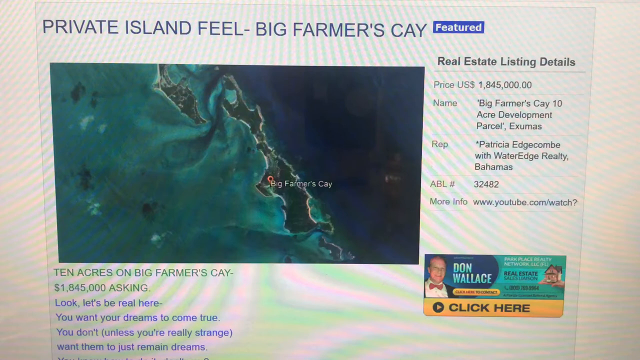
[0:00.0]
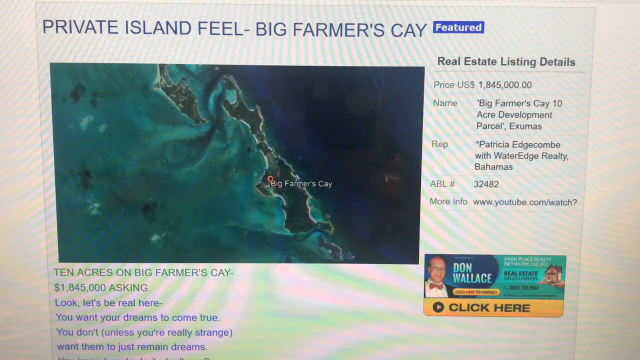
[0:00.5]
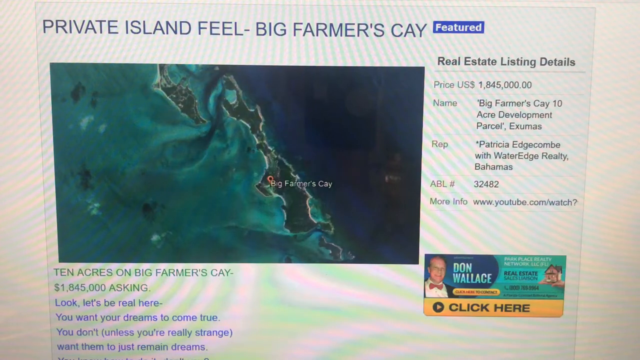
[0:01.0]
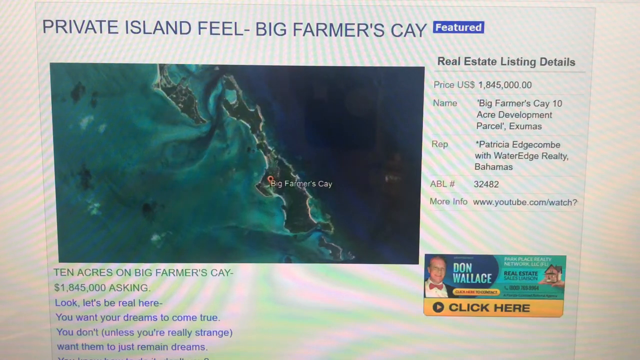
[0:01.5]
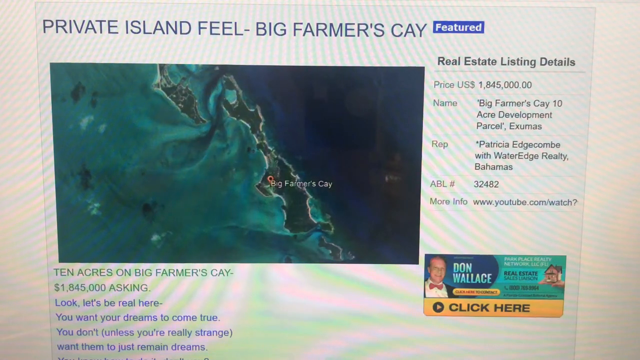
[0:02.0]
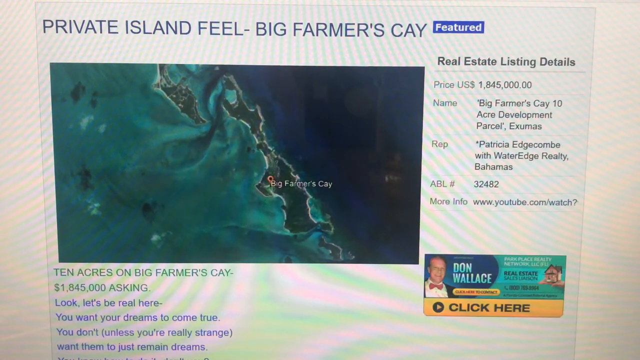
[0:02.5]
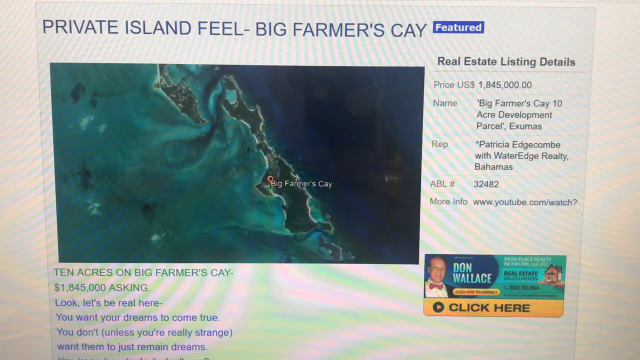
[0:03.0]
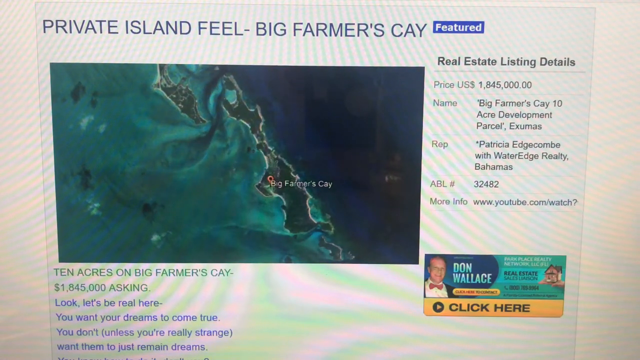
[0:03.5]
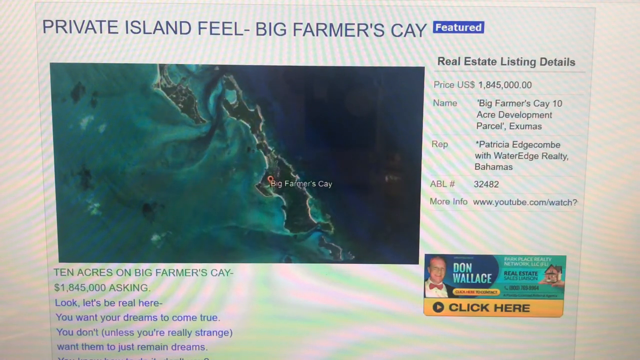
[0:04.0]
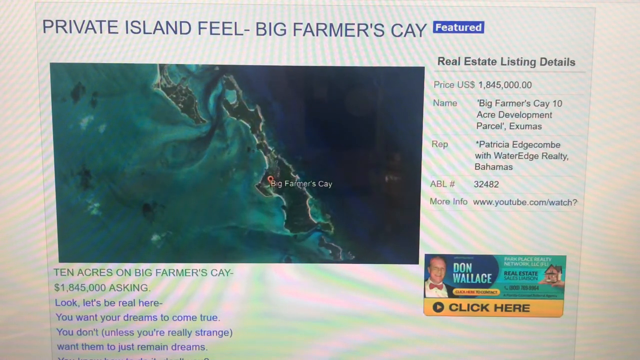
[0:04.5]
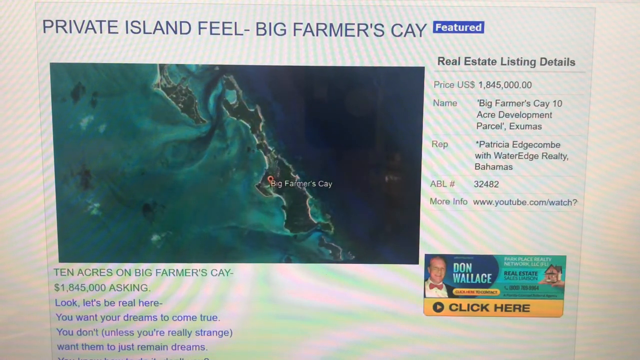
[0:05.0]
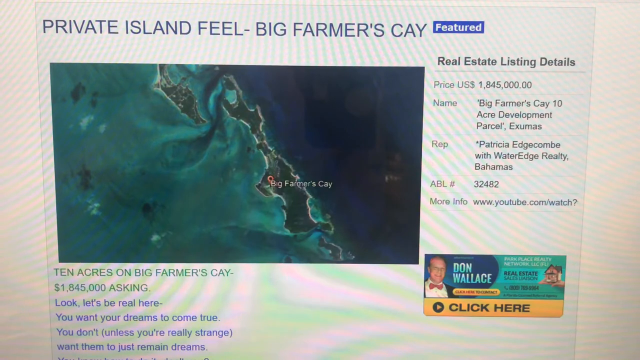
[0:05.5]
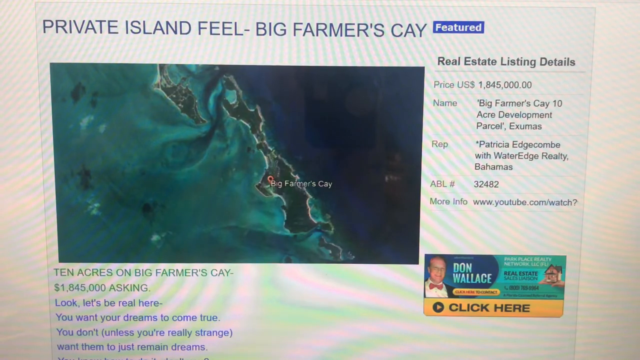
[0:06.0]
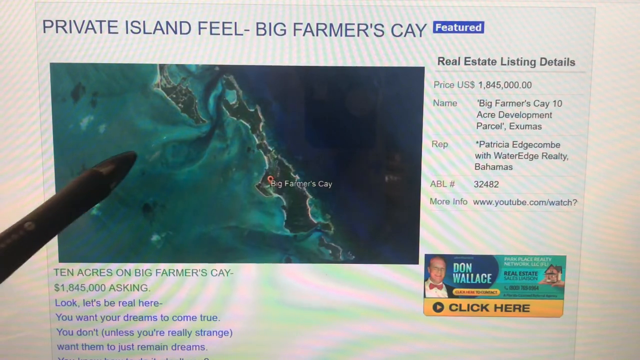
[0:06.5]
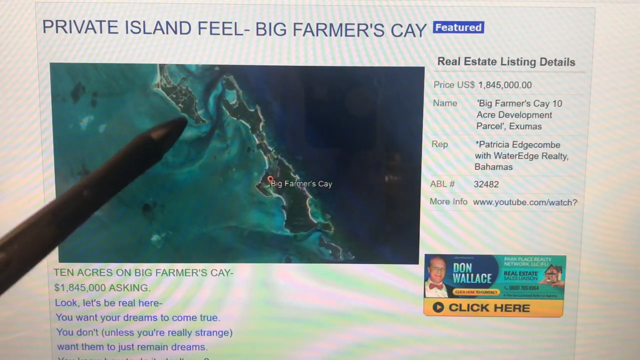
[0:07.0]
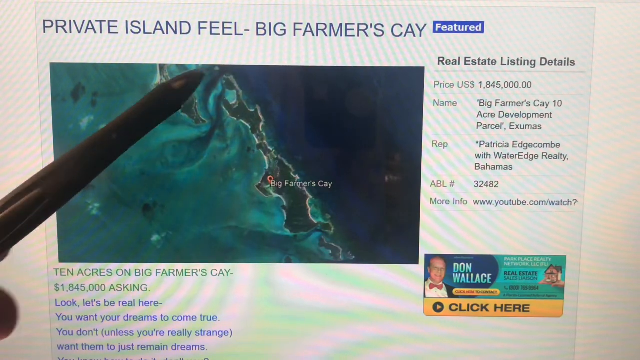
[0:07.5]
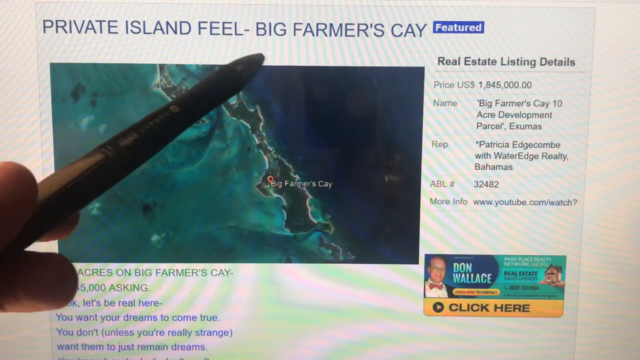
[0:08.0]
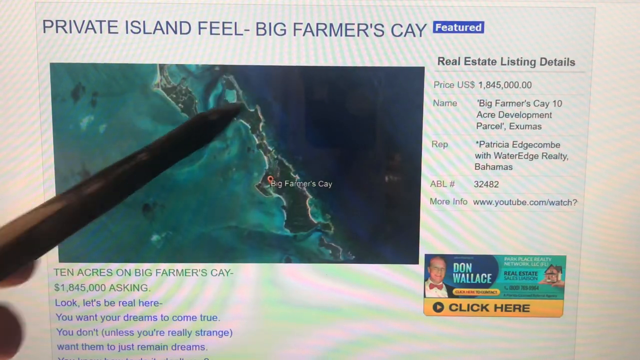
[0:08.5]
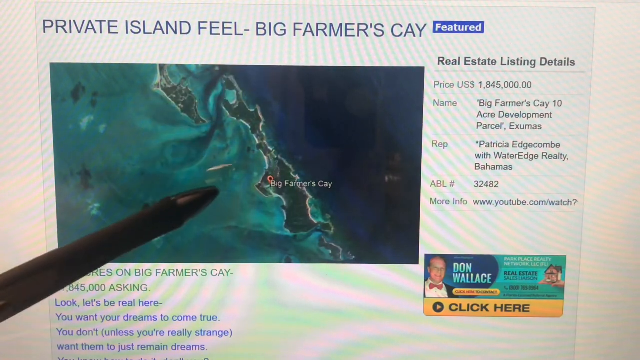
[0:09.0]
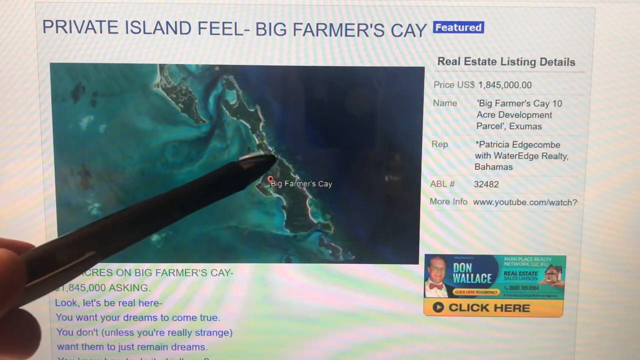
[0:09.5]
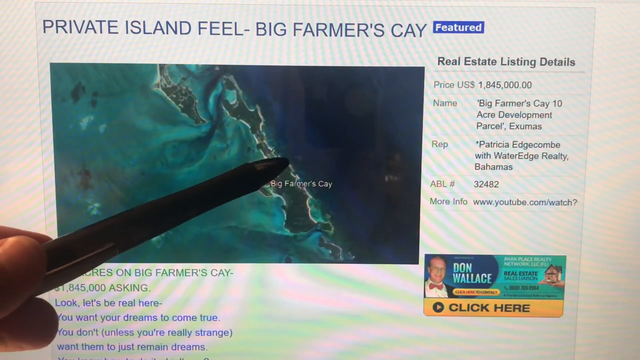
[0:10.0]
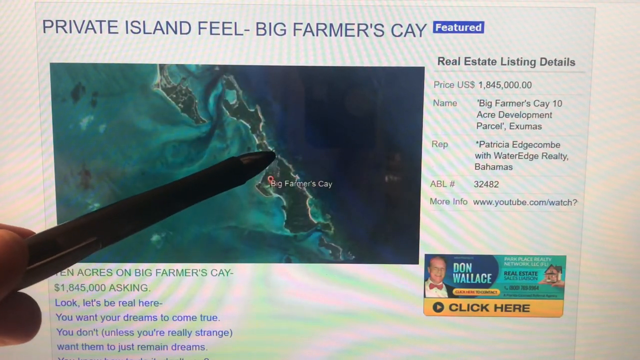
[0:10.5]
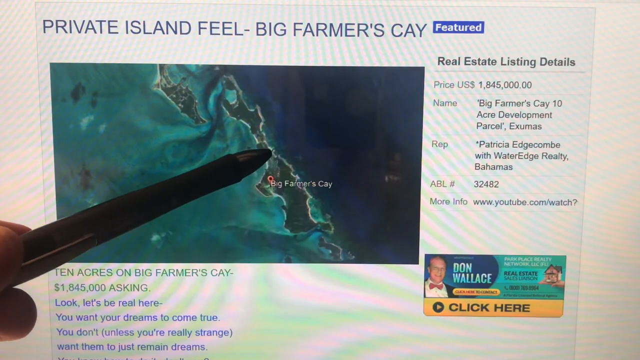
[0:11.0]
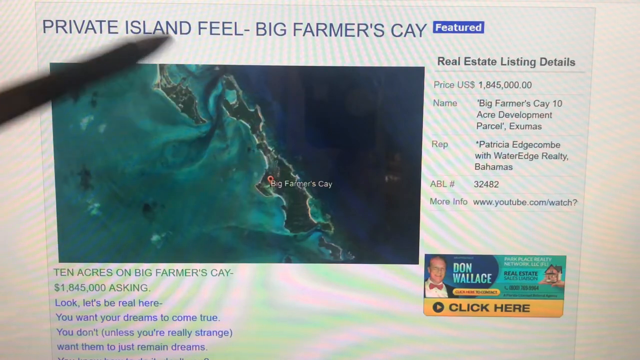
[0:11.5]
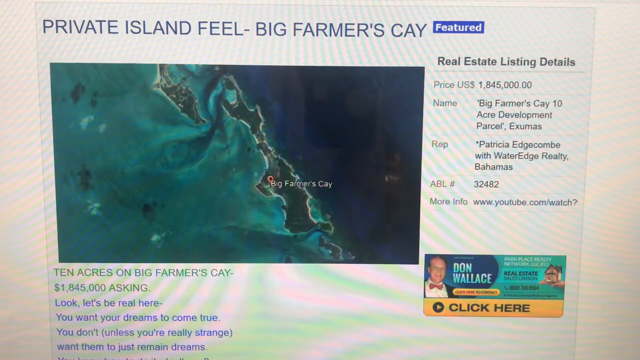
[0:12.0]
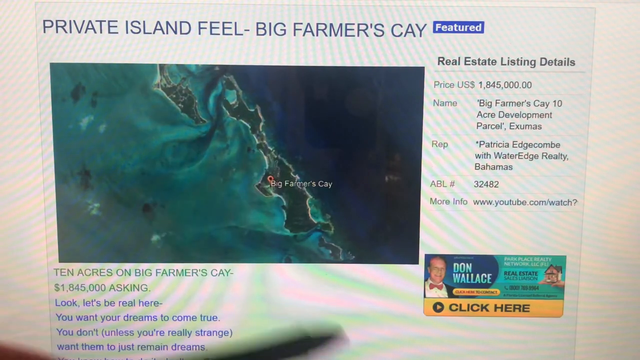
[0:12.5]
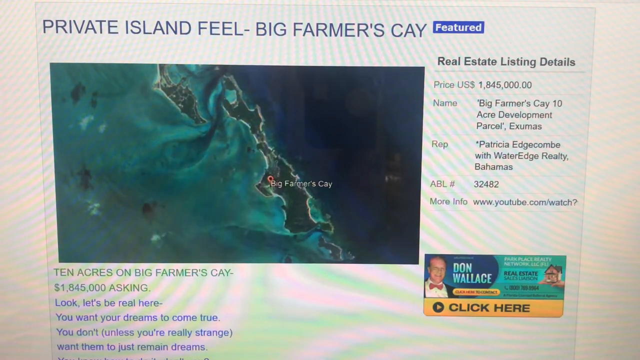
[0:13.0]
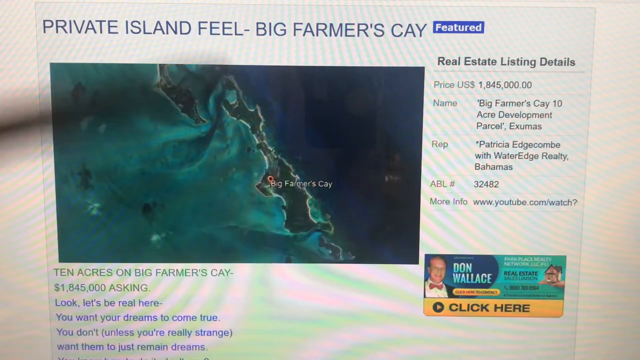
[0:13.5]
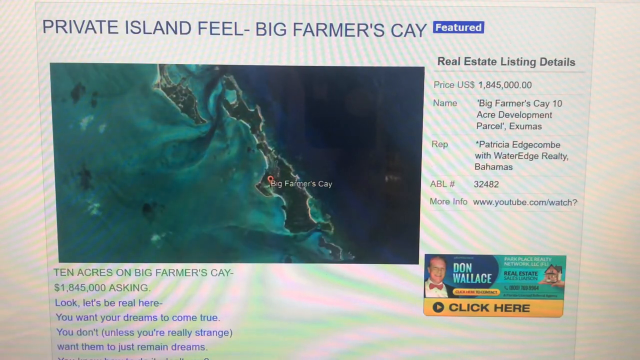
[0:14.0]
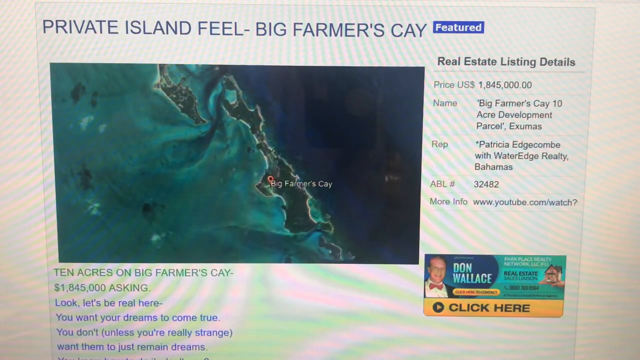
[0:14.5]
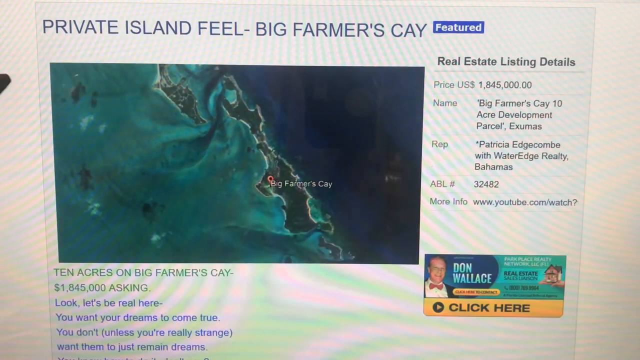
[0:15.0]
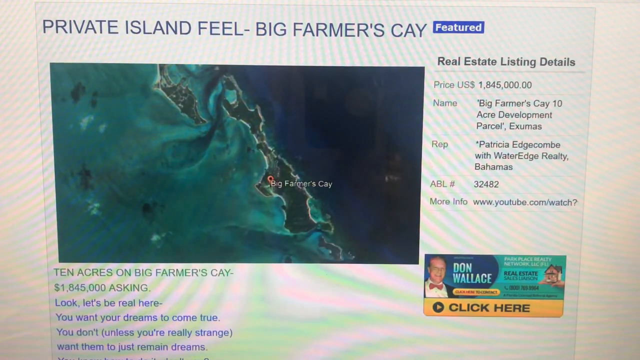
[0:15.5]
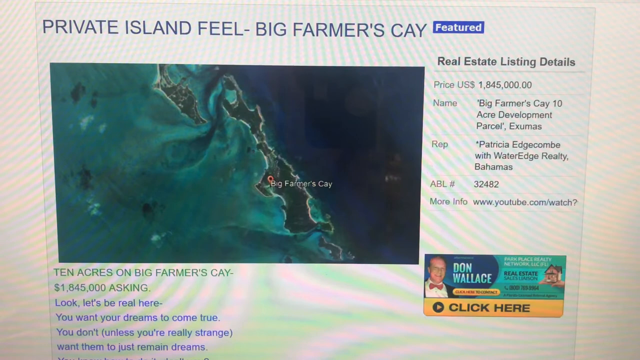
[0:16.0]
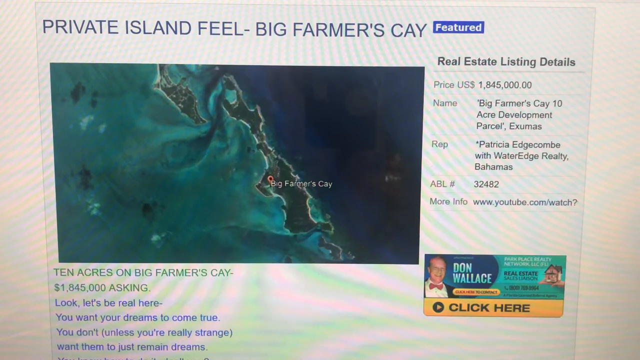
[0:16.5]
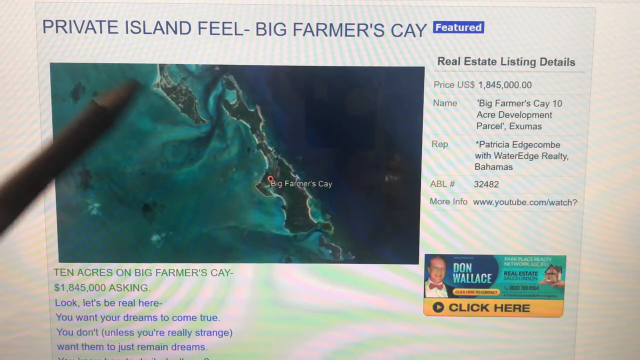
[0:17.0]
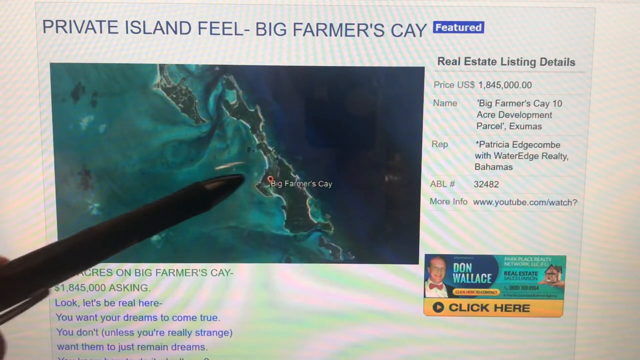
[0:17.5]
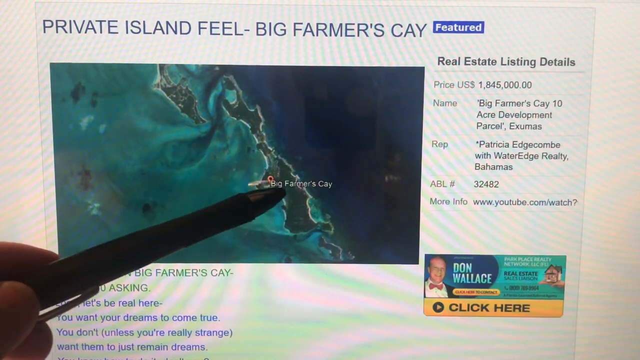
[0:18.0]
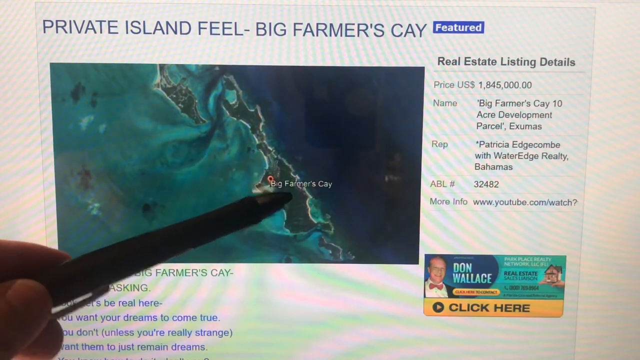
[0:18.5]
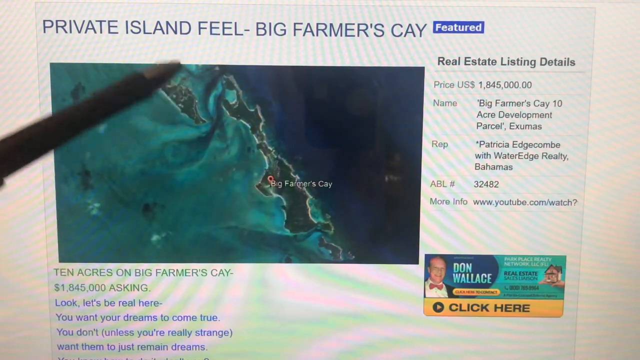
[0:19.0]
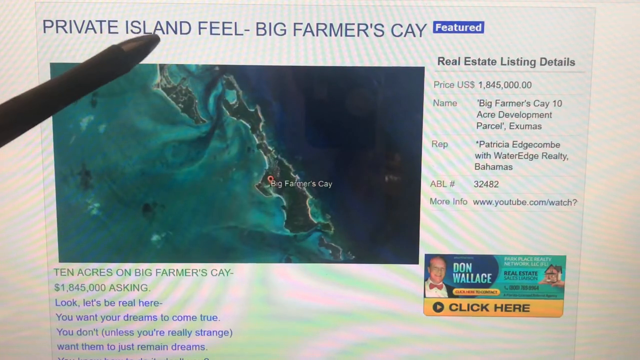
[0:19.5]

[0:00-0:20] A website shows a private island listed for sale, with the price in the upper right corner. The listing includes the name and the representative, a YouTube link for more info in the upper right corner, and an advertisement for the real estate in the lower right corner. In the lower left corner are the acreage of the listing and the price, and below that is a quirky message about potential buyers, apparently meant to stroke someone's ego. The person behind the camera points with a pen to places on the website, first the island and the title. They are probably indicating Big Farmer's Cave, pointing with the pen to where it is located on the satellite photograph.